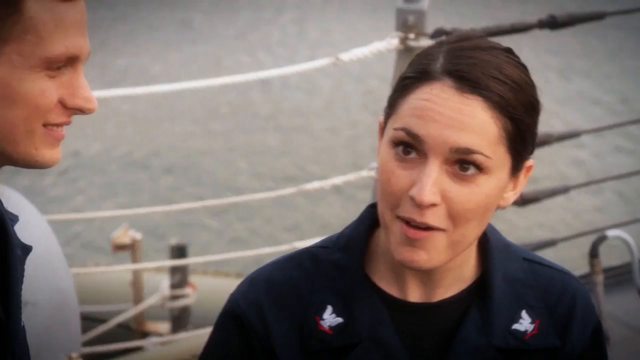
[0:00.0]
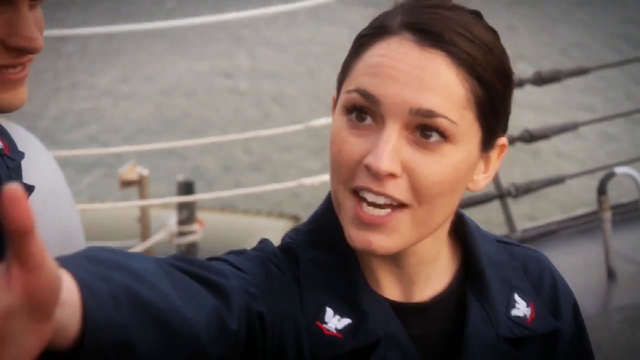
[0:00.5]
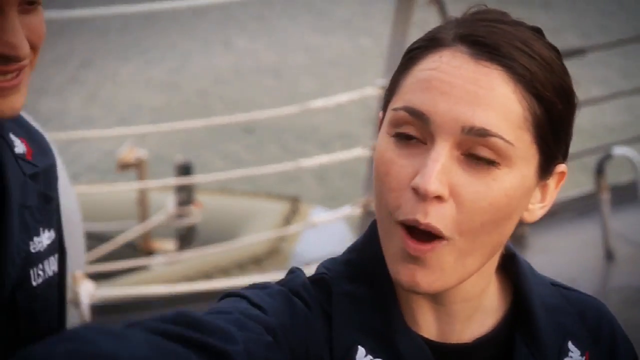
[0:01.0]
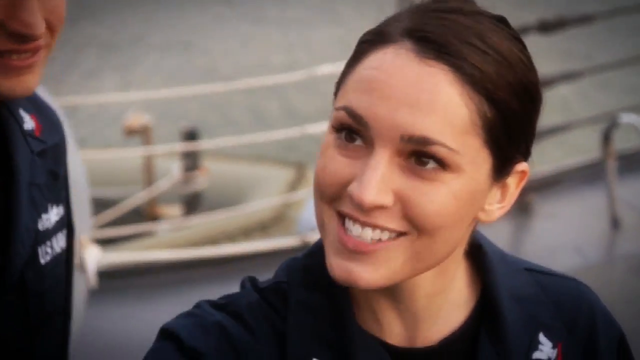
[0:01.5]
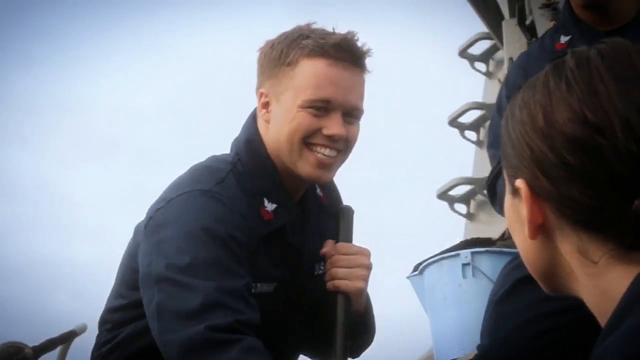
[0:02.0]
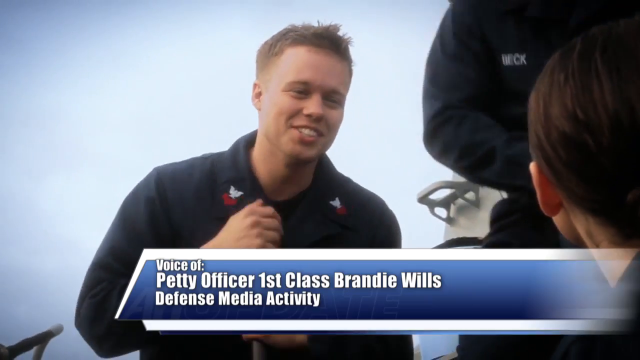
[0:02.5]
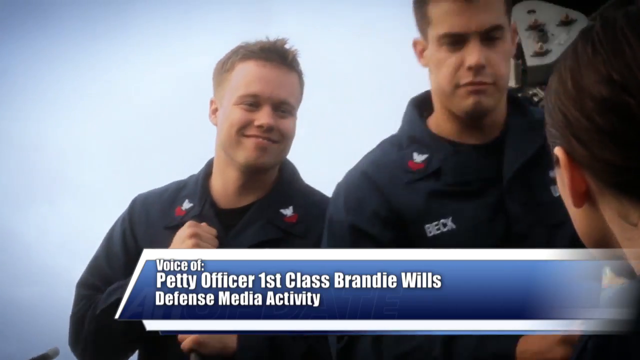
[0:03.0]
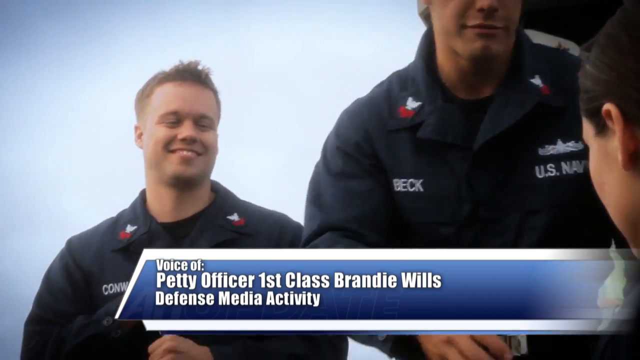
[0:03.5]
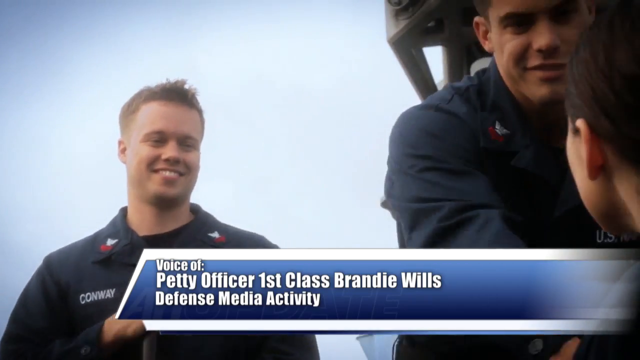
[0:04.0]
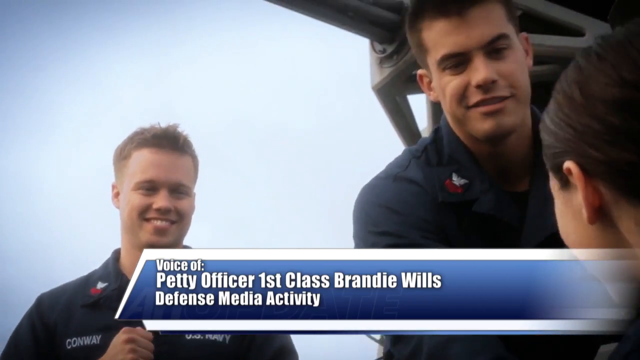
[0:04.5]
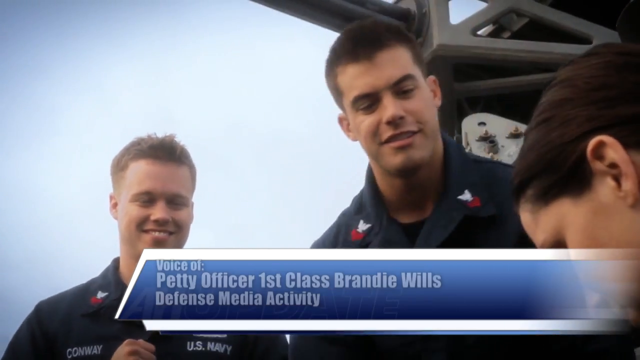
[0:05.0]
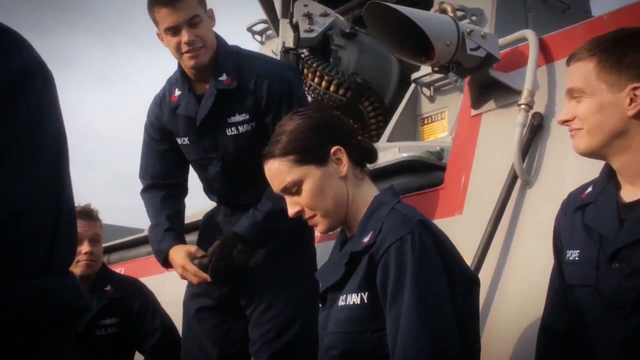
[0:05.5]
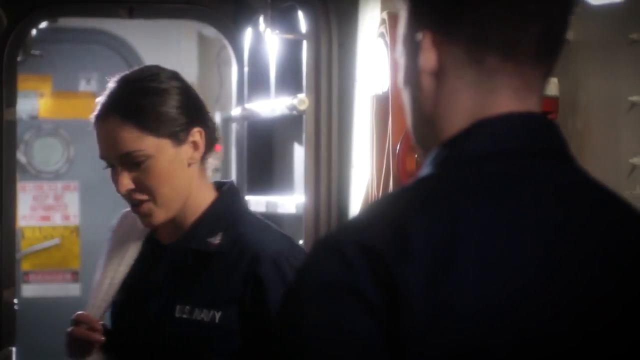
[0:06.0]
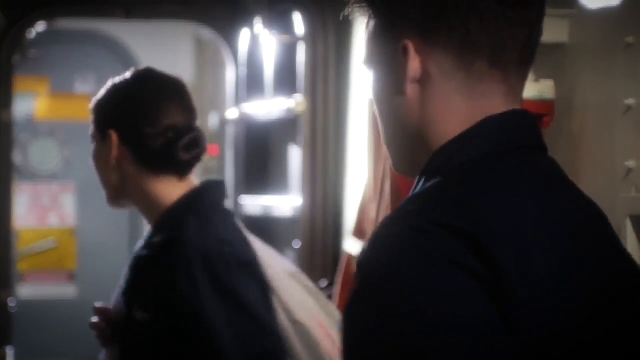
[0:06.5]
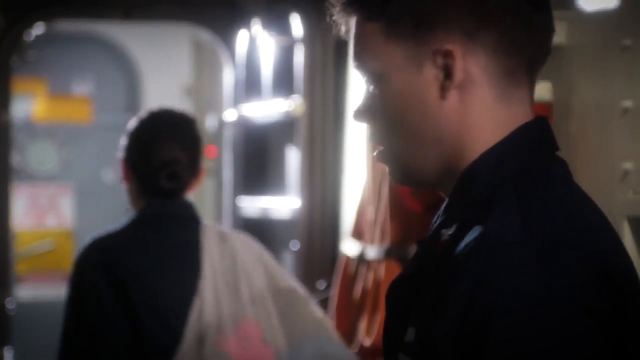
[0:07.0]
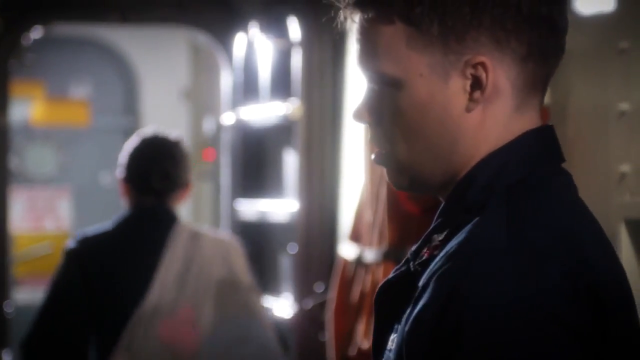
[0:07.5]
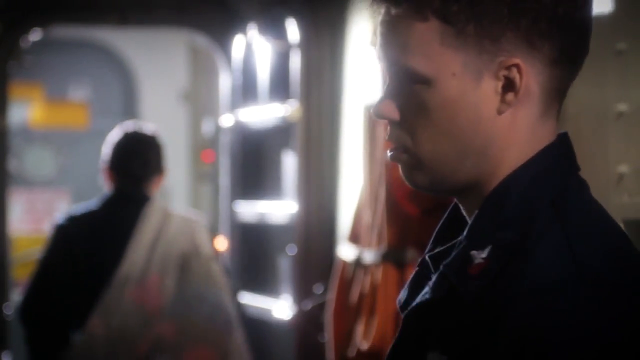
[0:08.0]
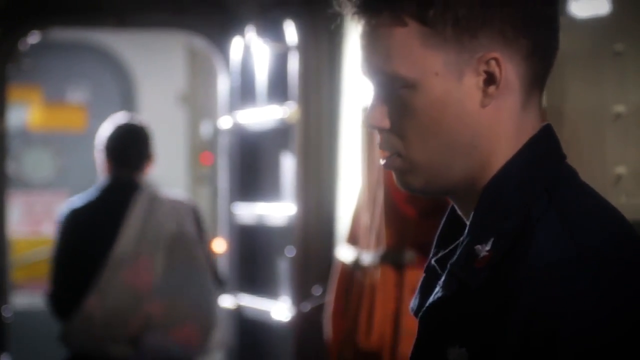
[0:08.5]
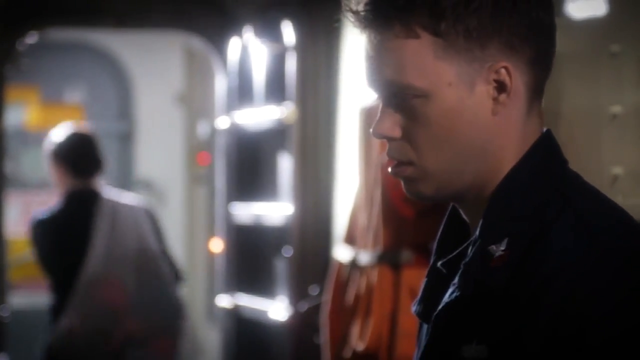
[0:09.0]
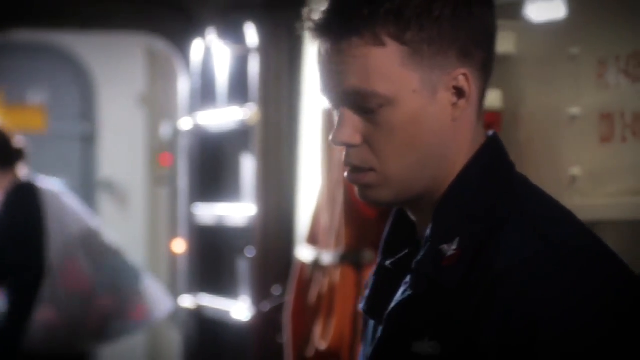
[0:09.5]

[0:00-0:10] A policewoman and a man are on the left. The name of petty officer first-class Brandy Willis, Defense Media Activity, then appears. There are two aircraft pilots; one has "Conaway" on his blue shirt, and on the right is a man with the name Beck. The uniforms are US military, and both of these men have short hair. Five people are present in total, including one woman in the US Army. There is something in the central part of the ship, and the people are talking about it. A man turns his head and walks back.